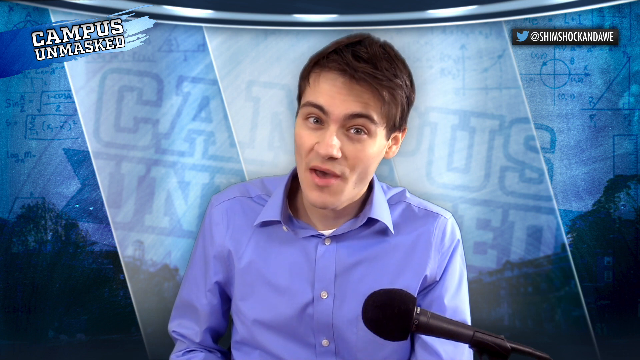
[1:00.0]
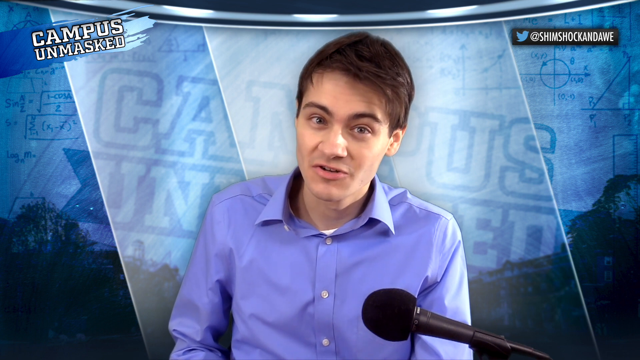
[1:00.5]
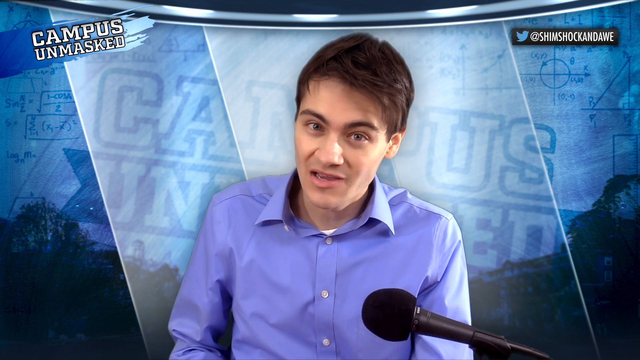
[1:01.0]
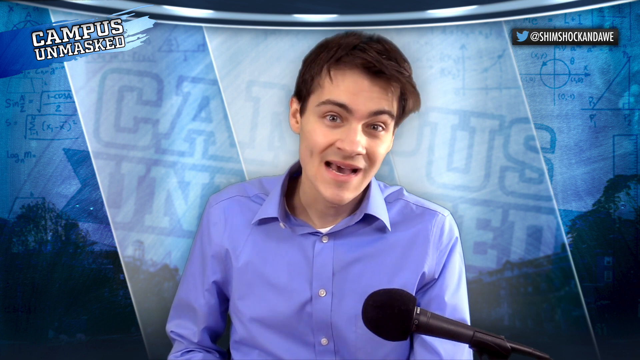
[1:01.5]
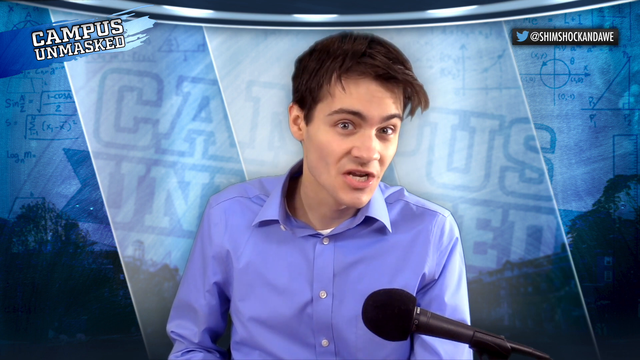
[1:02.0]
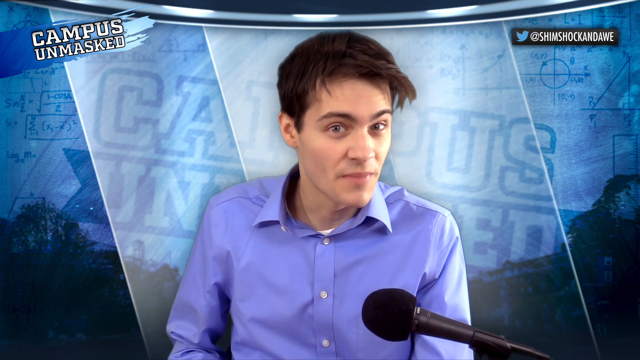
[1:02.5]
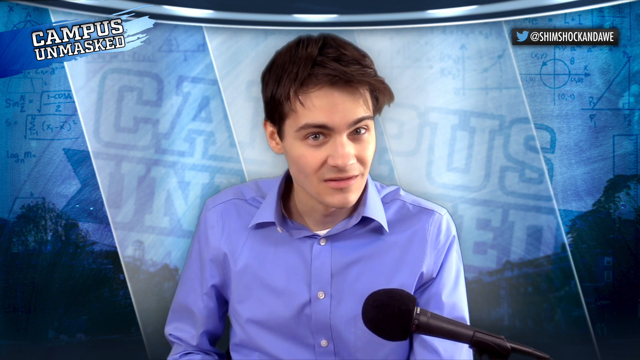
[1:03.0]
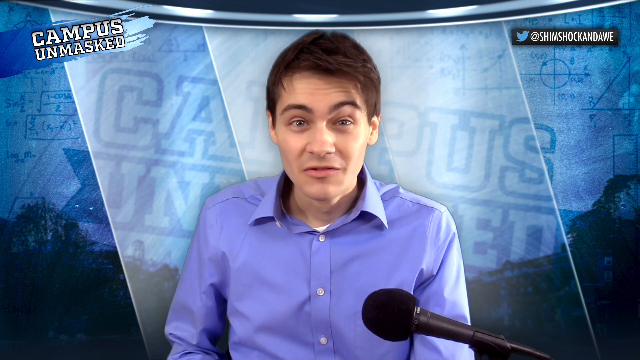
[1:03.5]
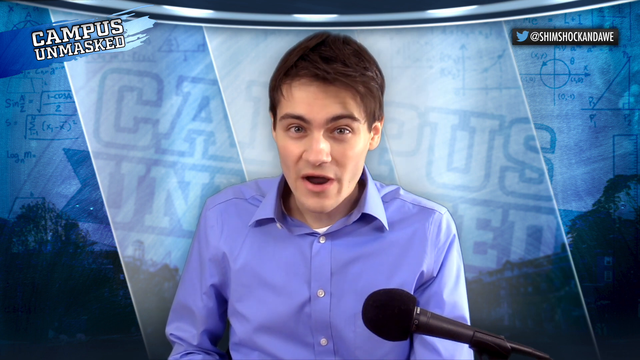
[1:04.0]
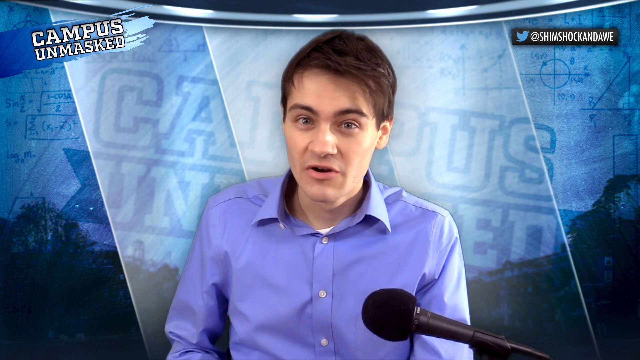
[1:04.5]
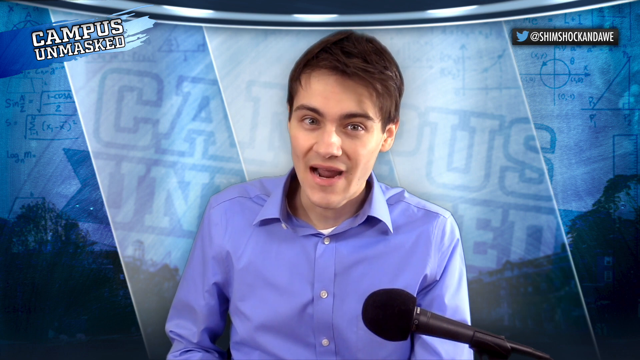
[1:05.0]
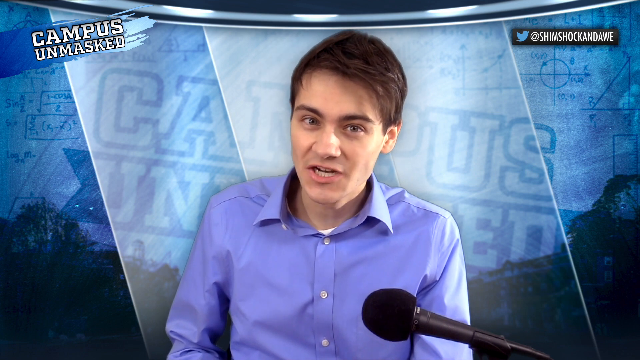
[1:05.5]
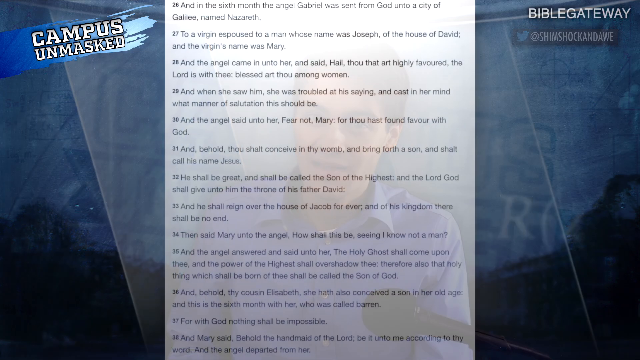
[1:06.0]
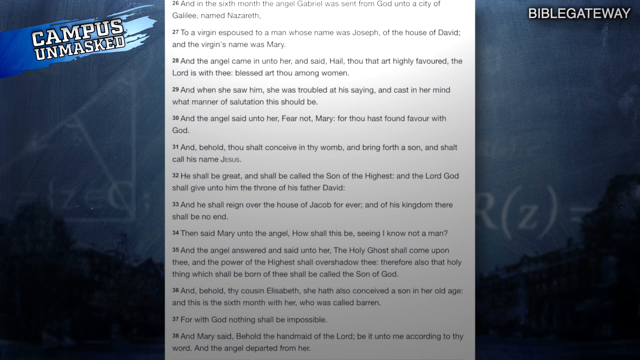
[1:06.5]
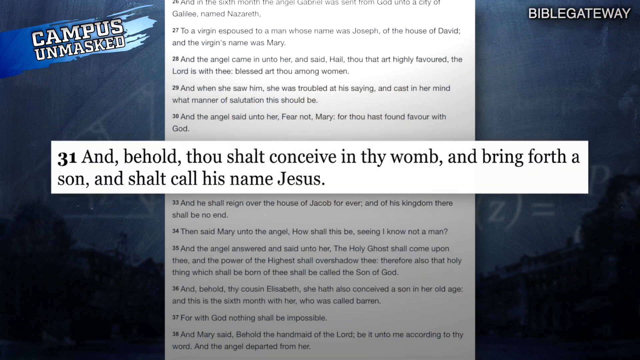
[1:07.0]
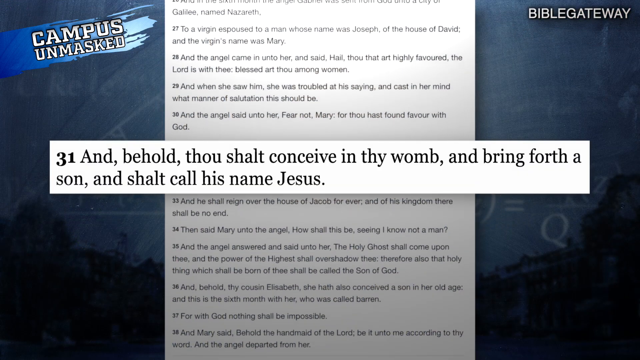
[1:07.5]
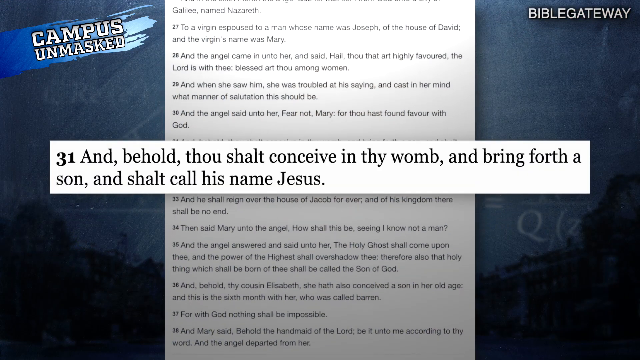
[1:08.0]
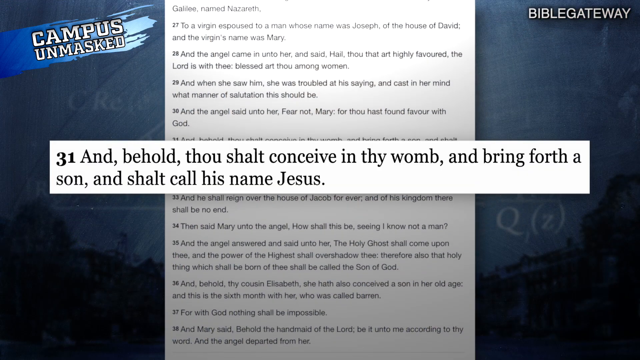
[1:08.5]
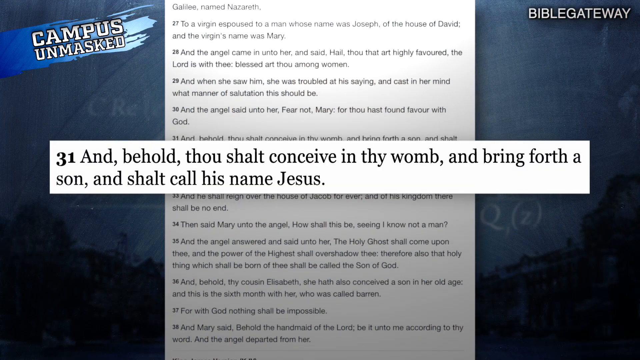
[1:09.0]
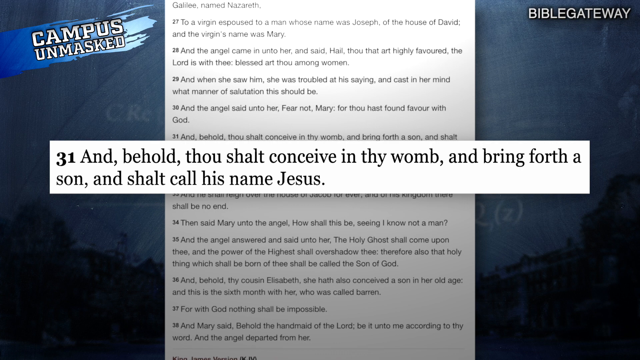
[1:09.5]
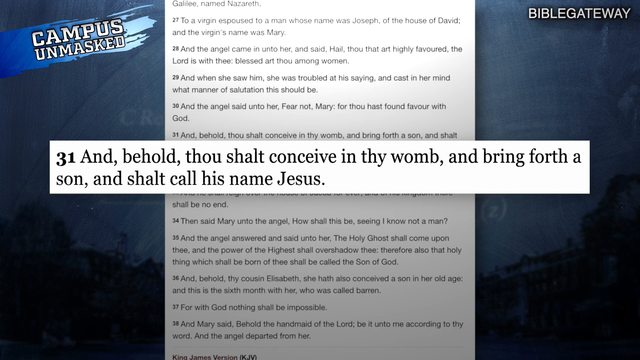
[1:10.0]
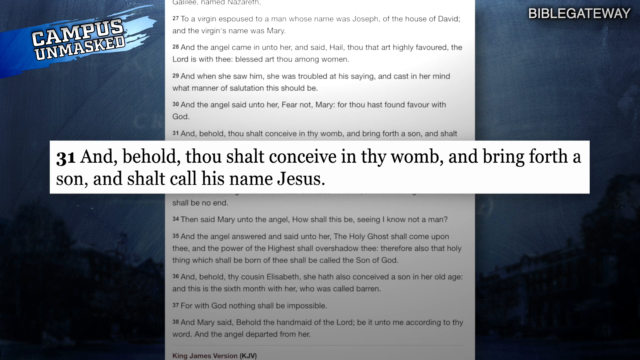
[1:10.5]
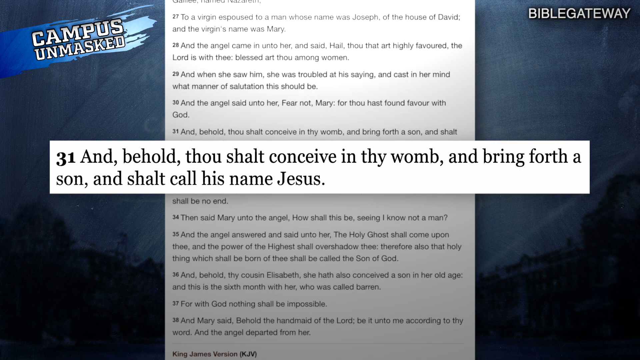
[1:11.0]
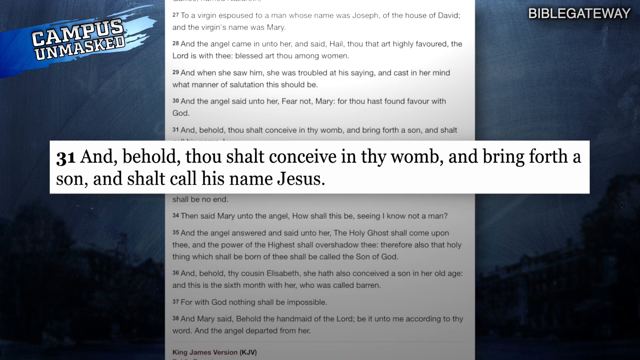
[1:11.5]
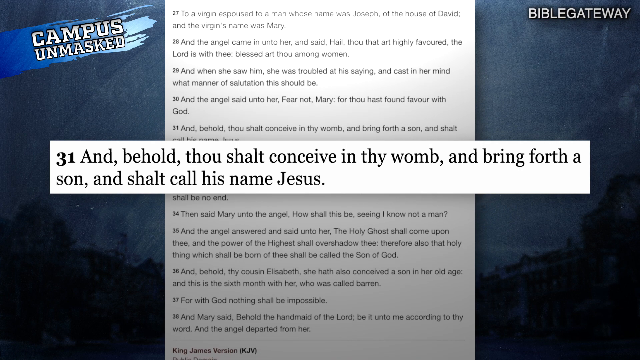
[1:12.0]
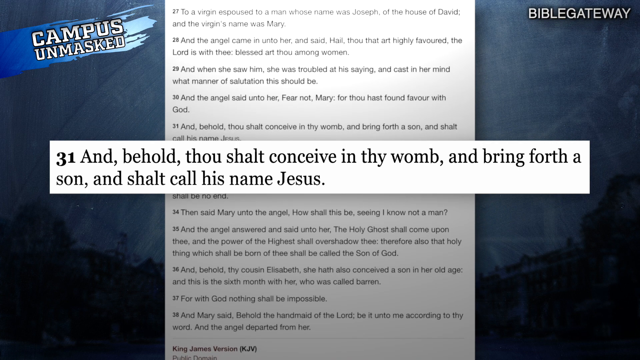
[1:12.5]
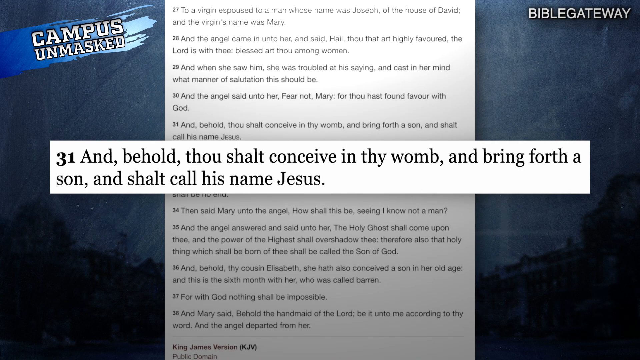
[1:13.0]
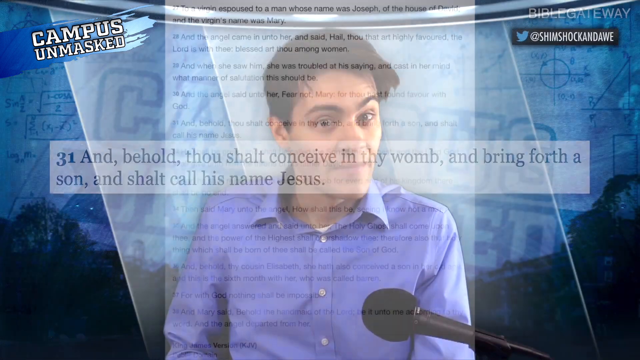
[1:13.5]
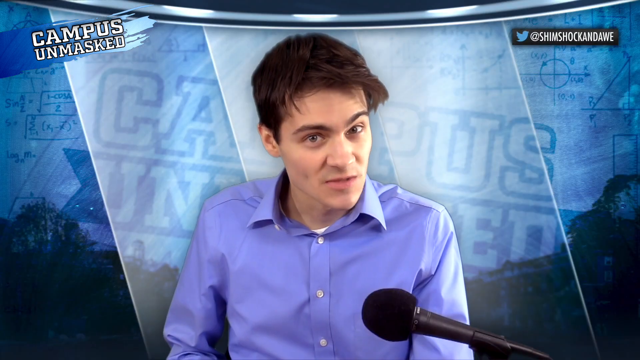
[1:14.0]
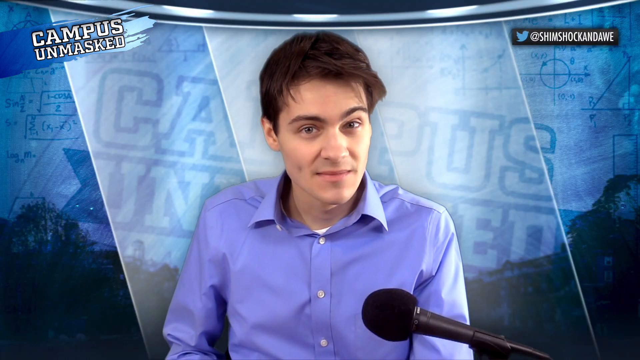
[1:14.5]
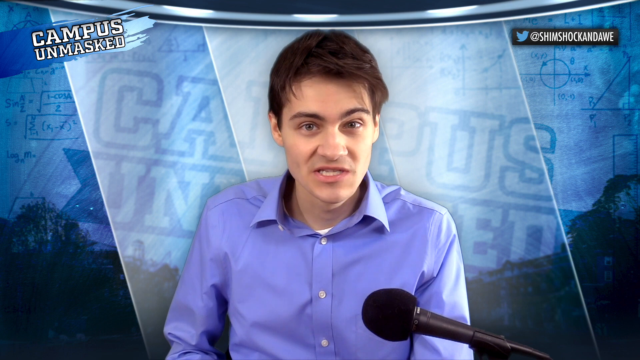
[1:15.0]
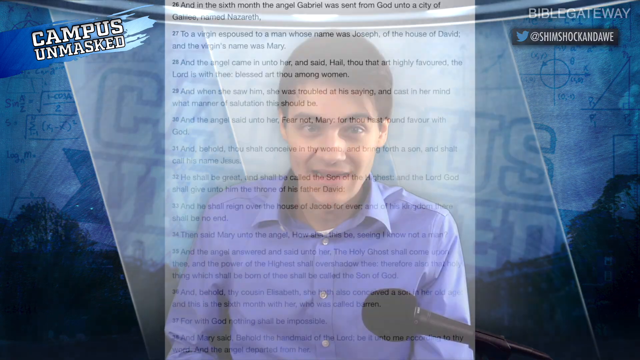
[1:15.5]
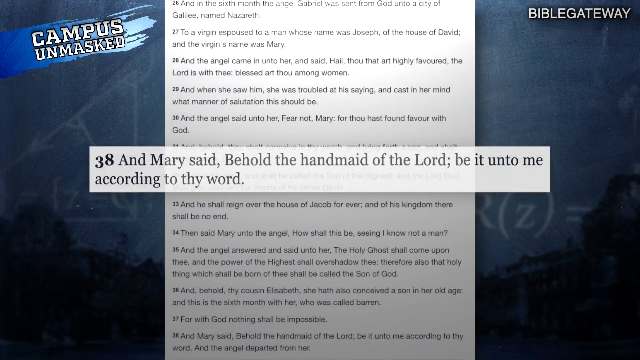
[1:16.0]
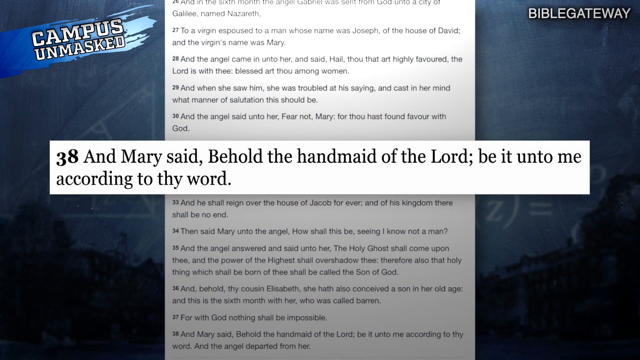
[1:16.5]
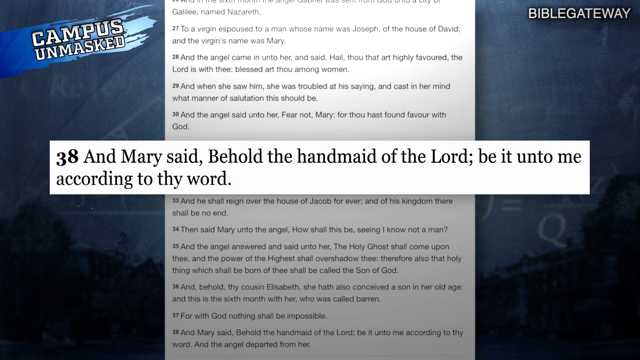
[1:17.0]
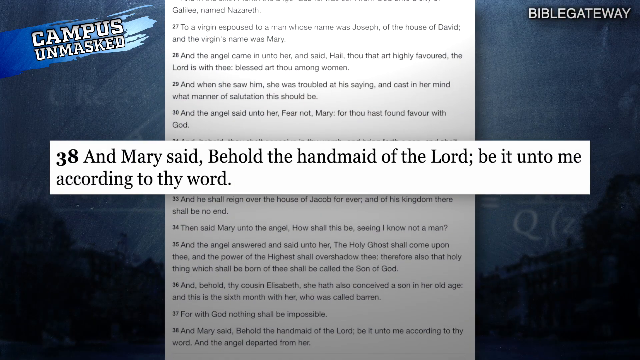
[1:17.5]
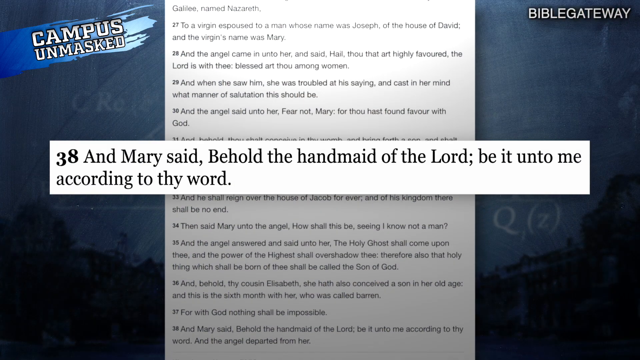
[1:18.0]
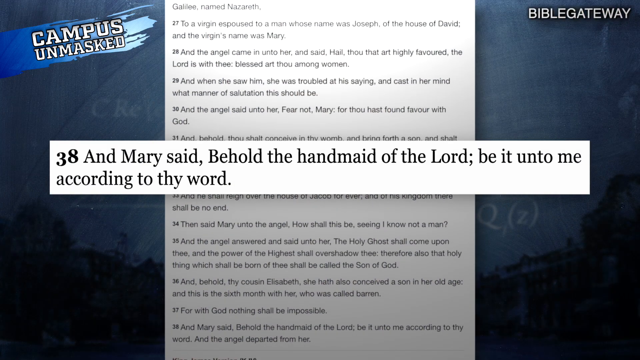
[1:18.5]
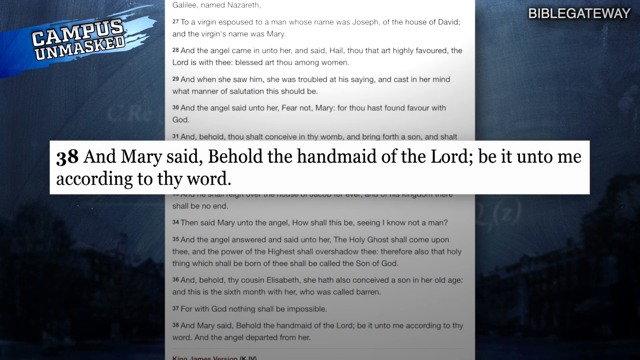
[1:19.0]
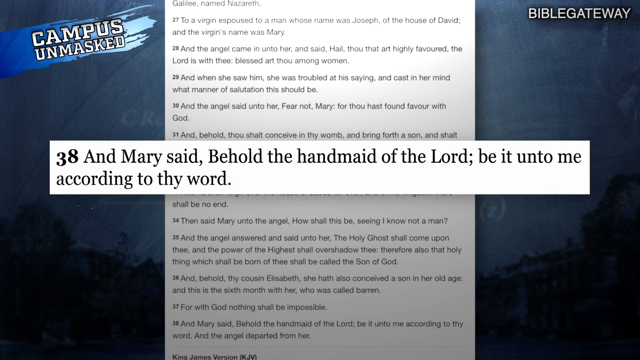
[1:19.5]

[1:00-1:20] Rob Shimshock, who seems to be a conservative, pulls up part of the Bible, from the Gospel. Verse 31 reads "and behold, thou shalt conceive in thy womb, and bring forth a son, and shalt call his name Jesus," and verse 38 reads "and Mary said, Behold the handmaid of the Lord, be it unto me according to thy word." The verse appears as a pop-up, a horizontal rectangle that pops up out of a vertical page of the Bible.